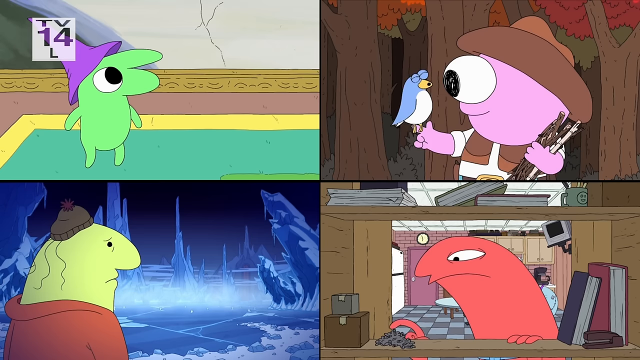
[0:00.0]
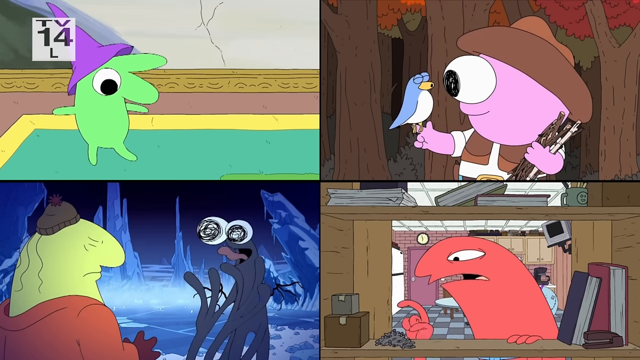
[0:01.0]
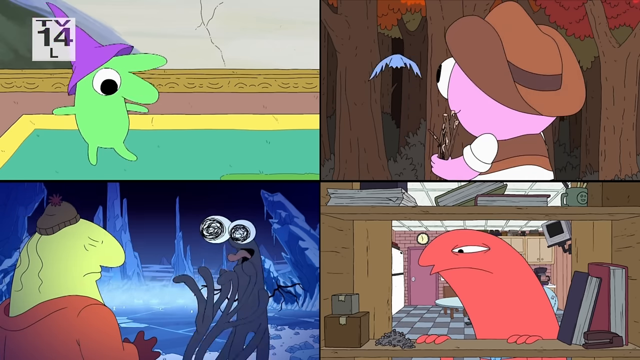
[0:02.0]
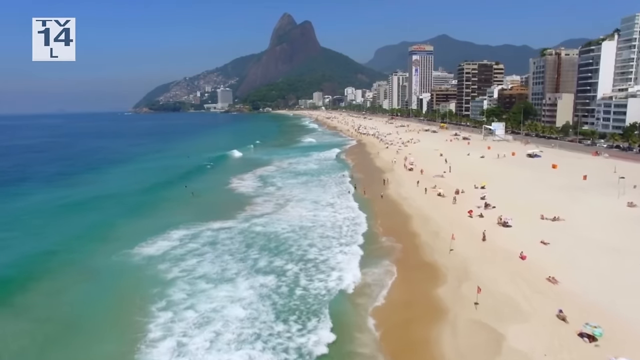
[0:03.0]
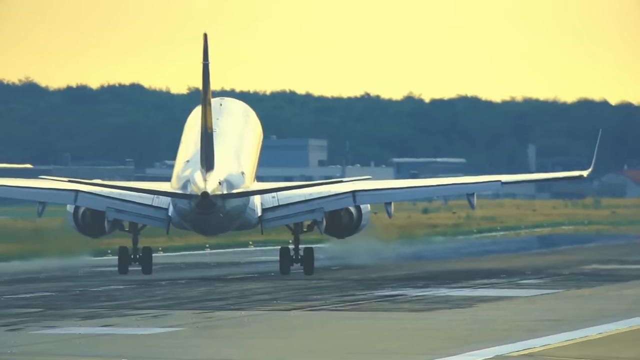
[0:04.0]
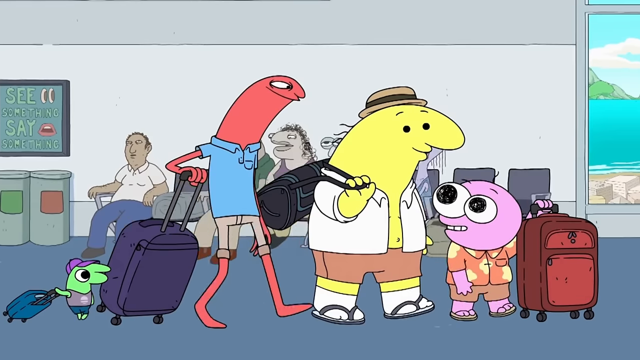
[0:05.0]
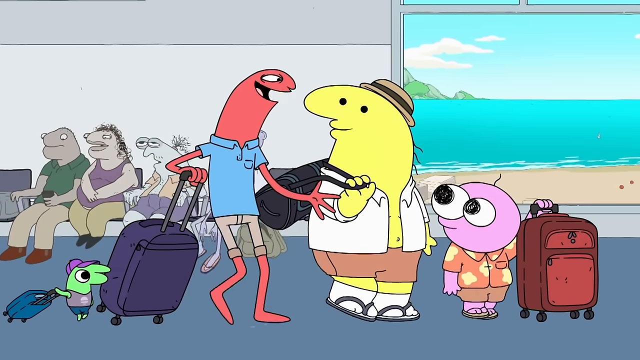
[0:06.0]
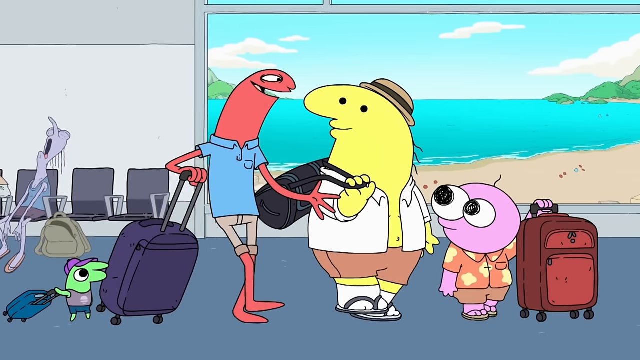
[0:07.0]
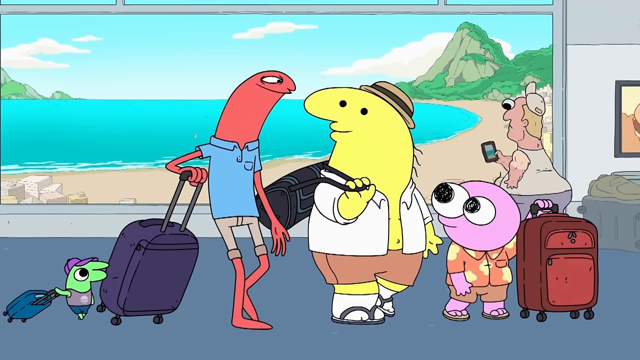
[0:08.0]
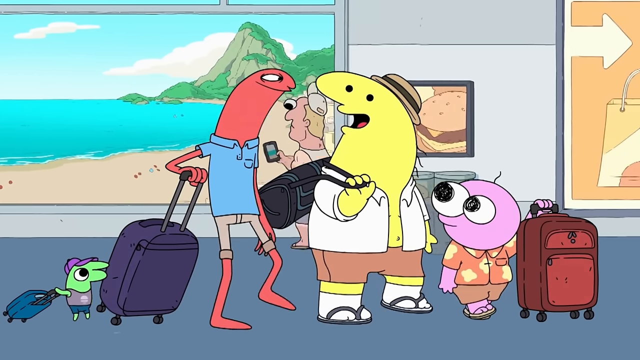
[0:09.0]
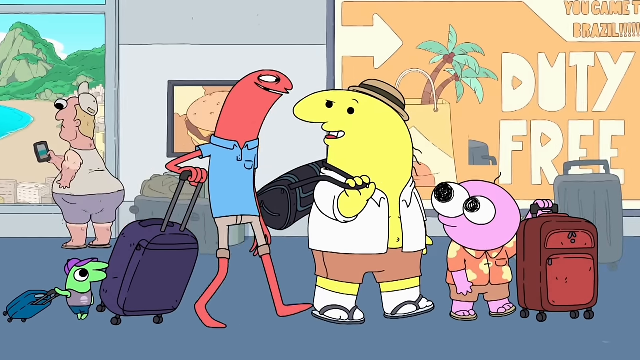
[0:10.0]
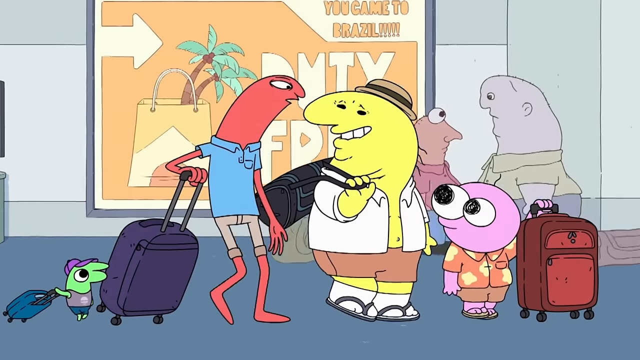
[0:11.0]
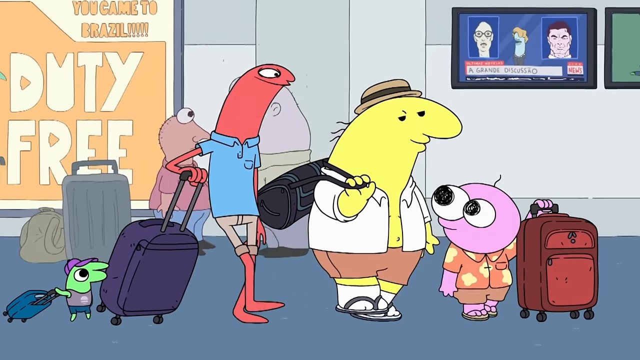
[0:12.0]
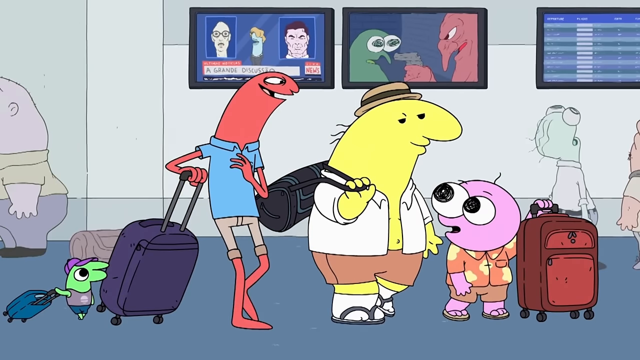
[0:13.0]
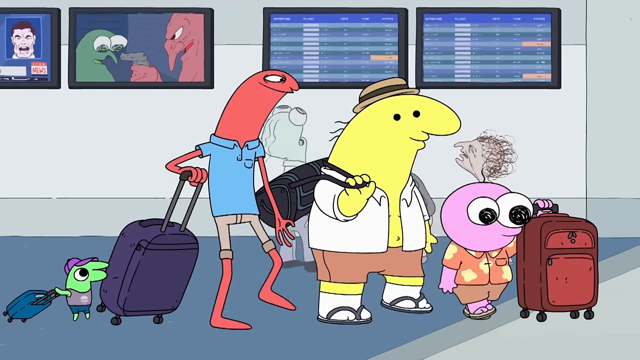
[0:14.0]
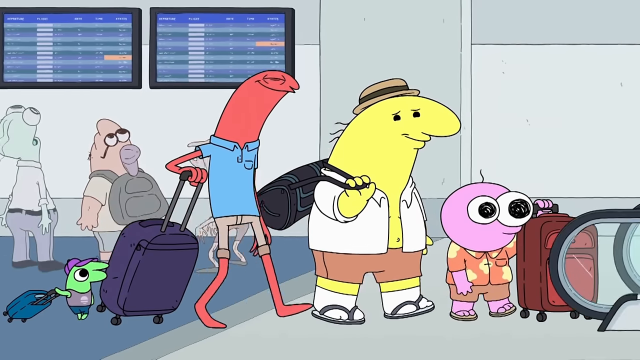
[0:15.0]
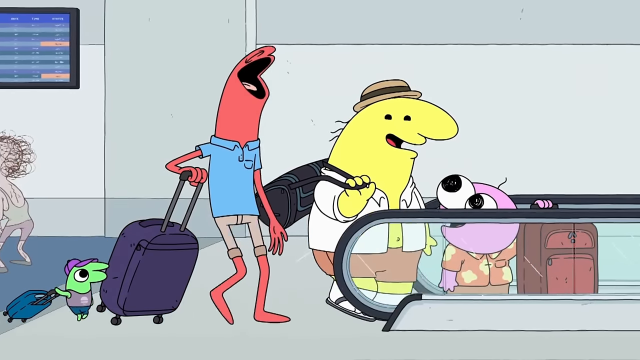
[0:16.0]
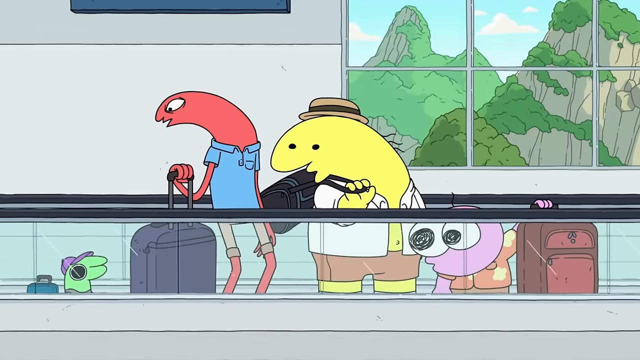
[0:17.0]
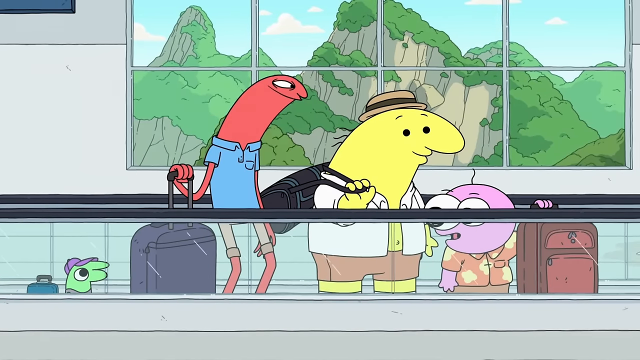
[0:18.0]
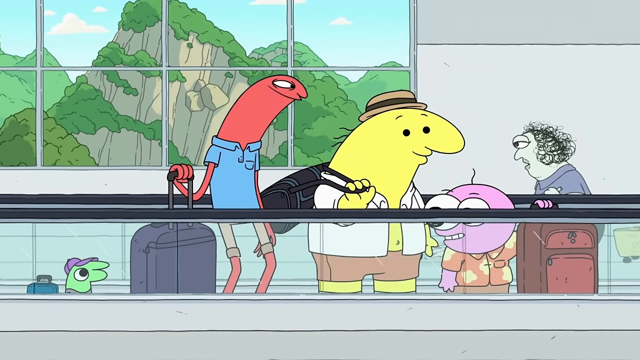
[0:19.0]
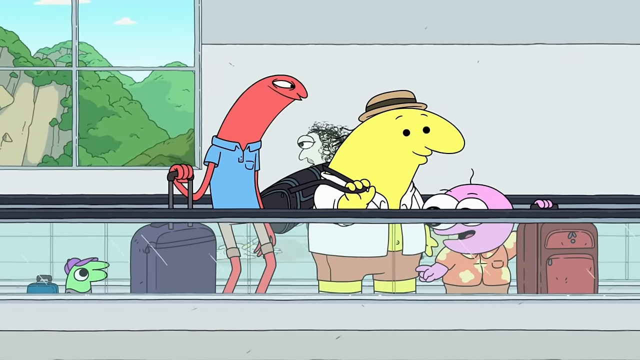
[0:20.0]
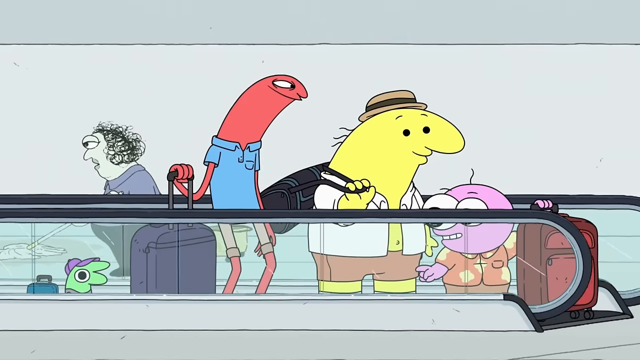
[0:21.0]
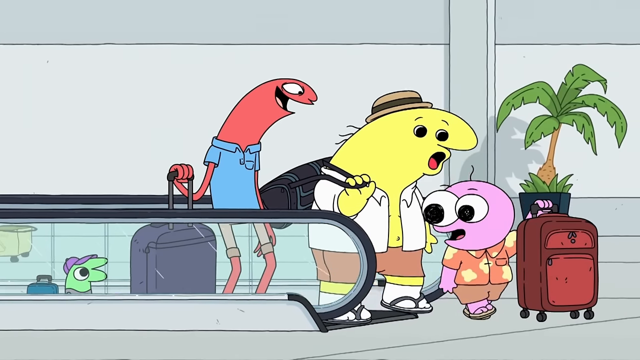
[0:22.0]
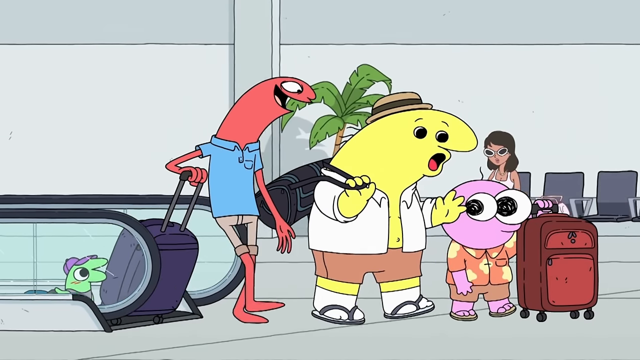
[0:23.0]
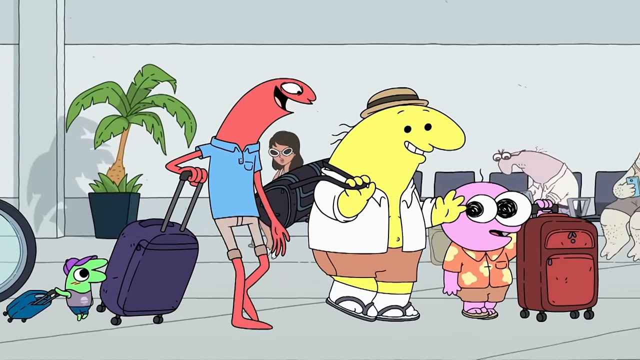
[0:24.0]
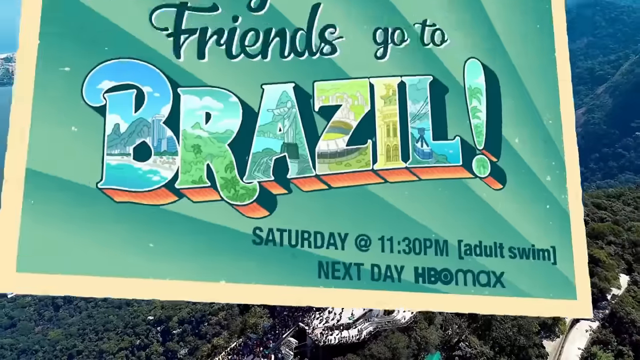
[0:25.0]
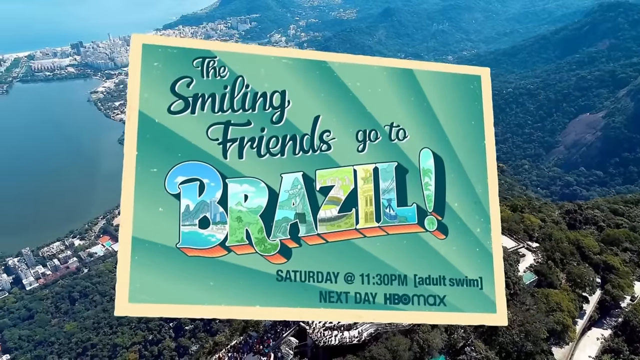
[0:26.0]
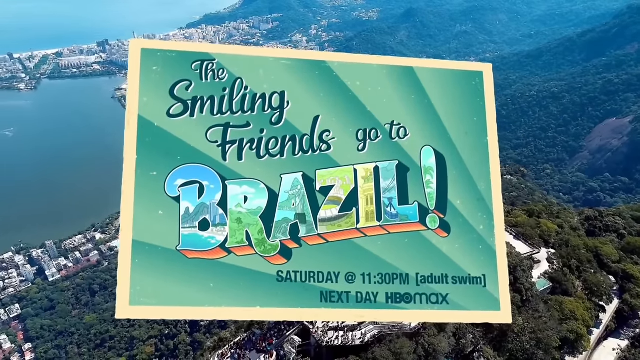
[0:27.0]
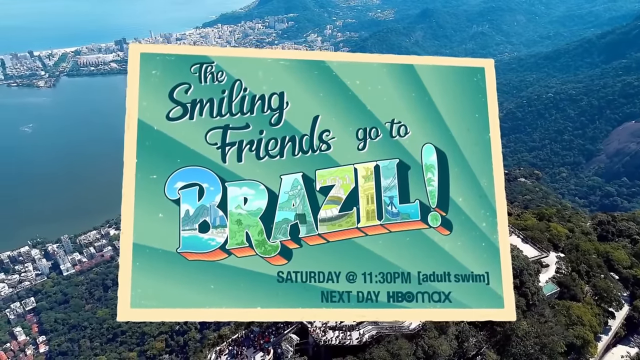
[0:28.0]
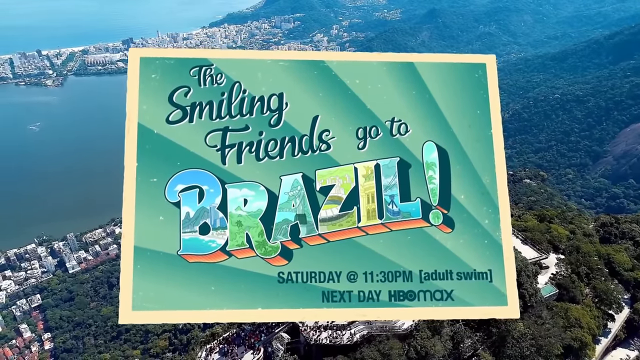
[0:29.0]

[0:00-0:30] A title from Adult Swim at the top of the screen reads "The Smiling Friends go to Brazil," and a banner in the middle of the screen says the same thing, "The Smiling Friends go to Brazil." The video is an advertisement for the Adult Swim show The Smiling Friends. The animated characters walk through an airport. A small green creature is in the back, and in front of it is a large red creature that is skinny, with a long neck and an animated face. Beside those two is a large yellow blob creature wearing a top hat and carrying a bag over his shoulder, and in front of him is a little pink creature with large eyes and a round pink head, who is very short. The pink creature is apparently named Pim and the yellow one Charlie. They are riding one of those escalators that you stand on and that carry you through the airport, apparently on their way to Brazil.